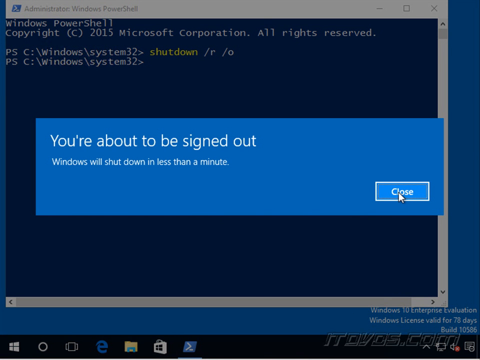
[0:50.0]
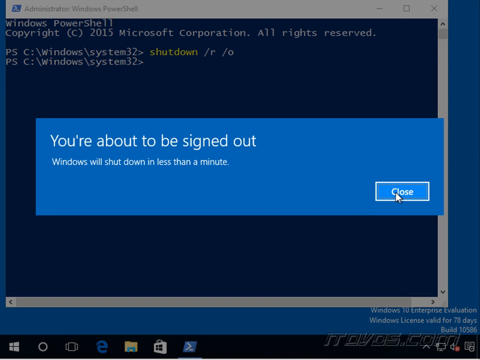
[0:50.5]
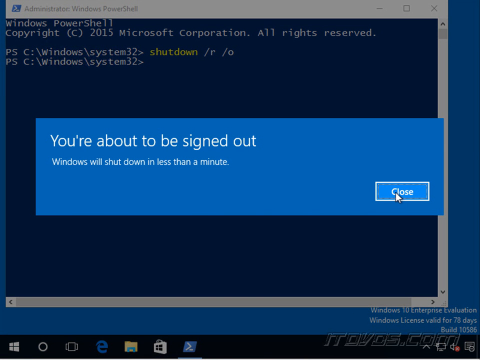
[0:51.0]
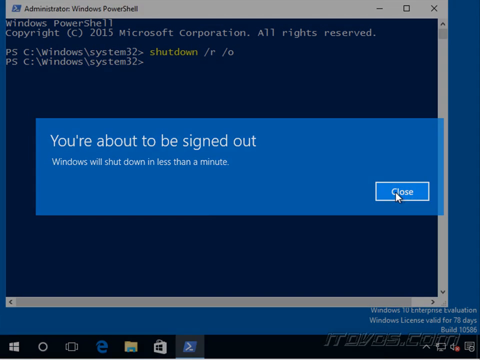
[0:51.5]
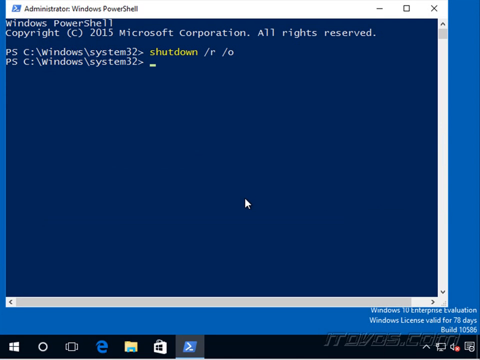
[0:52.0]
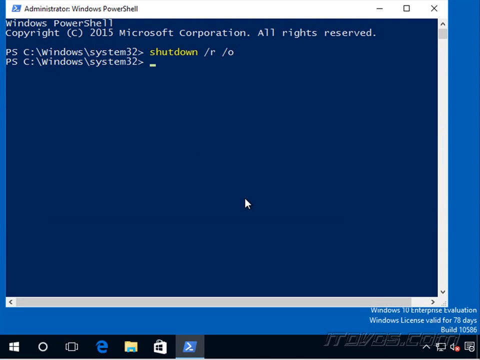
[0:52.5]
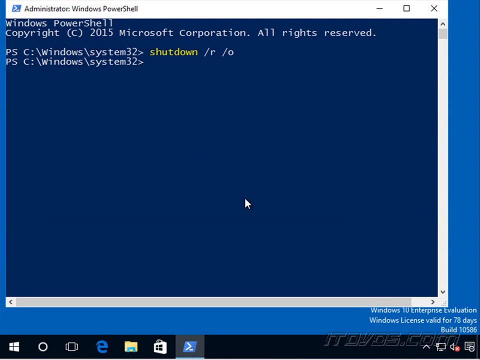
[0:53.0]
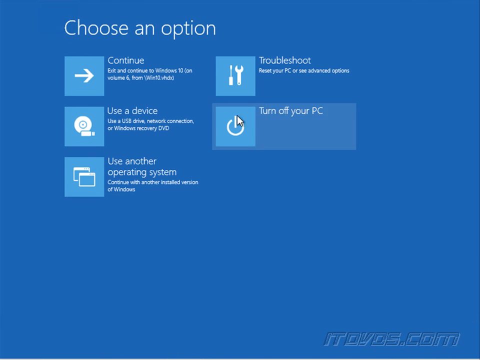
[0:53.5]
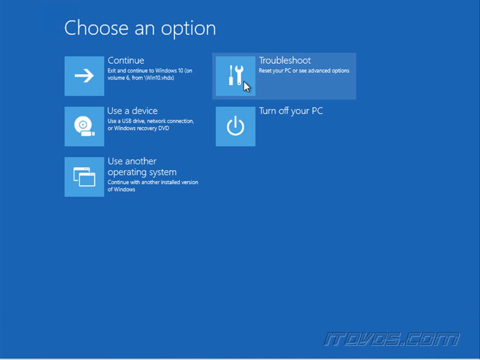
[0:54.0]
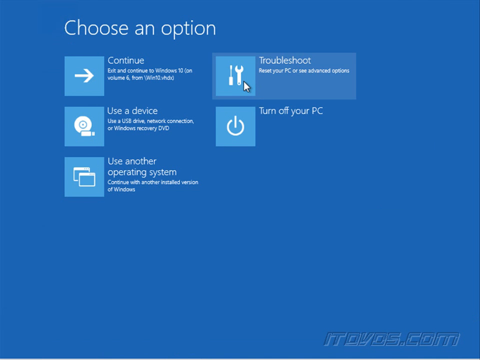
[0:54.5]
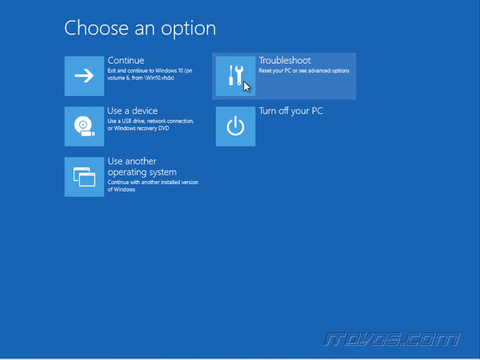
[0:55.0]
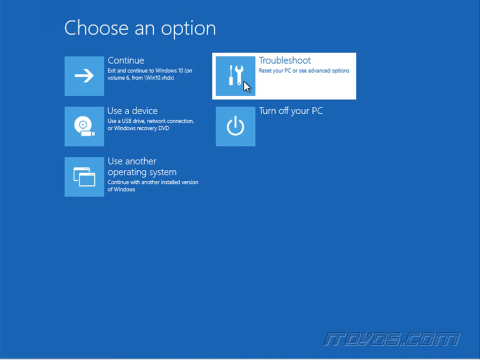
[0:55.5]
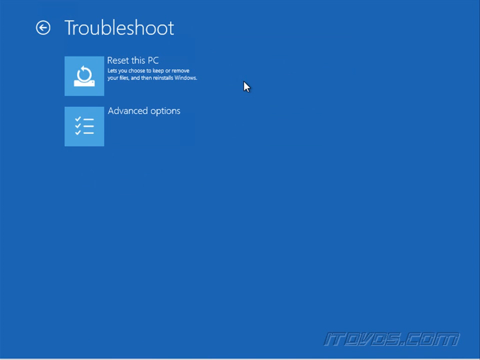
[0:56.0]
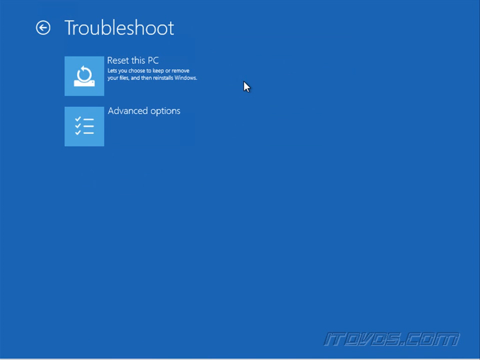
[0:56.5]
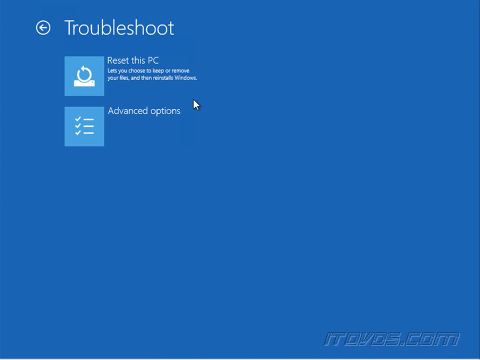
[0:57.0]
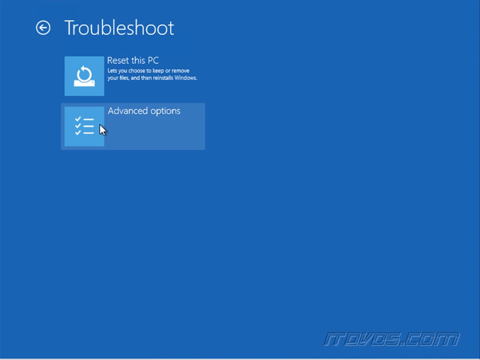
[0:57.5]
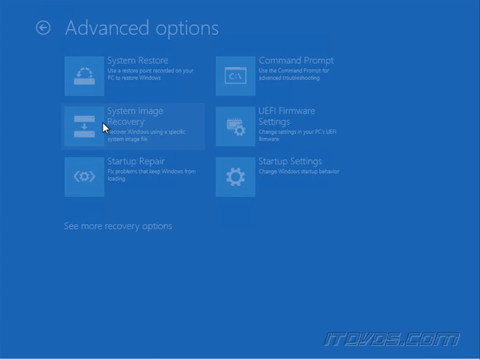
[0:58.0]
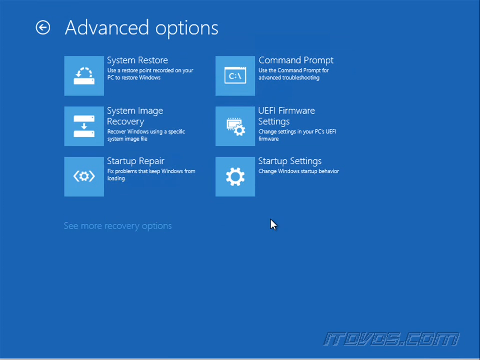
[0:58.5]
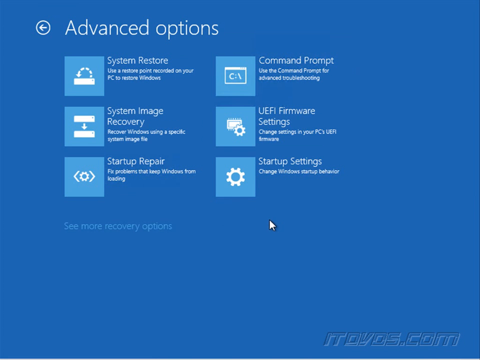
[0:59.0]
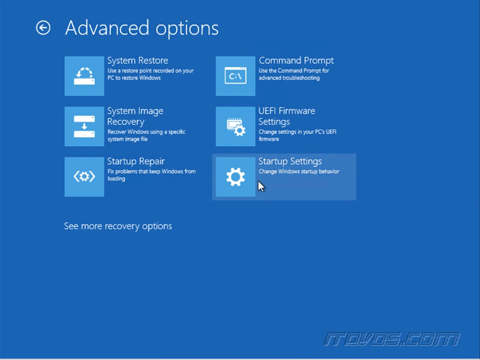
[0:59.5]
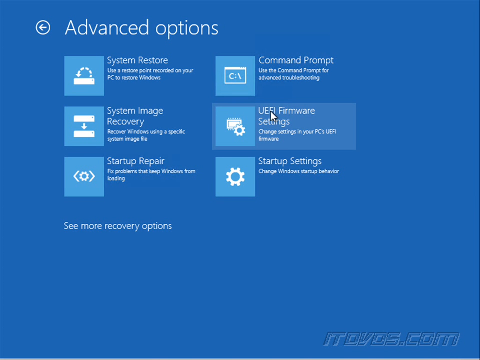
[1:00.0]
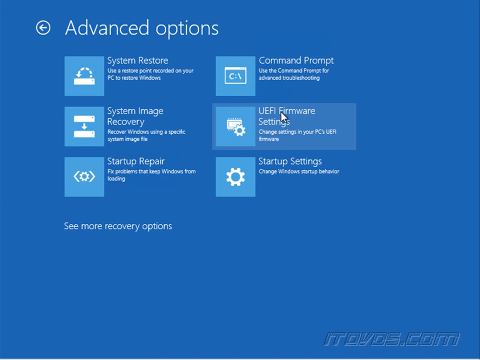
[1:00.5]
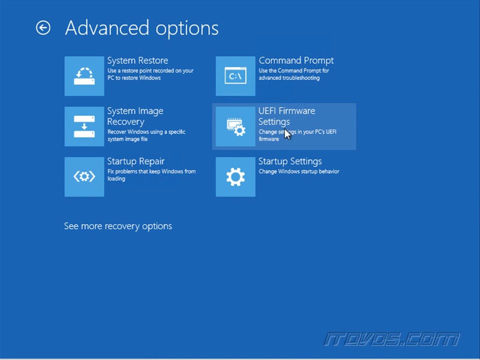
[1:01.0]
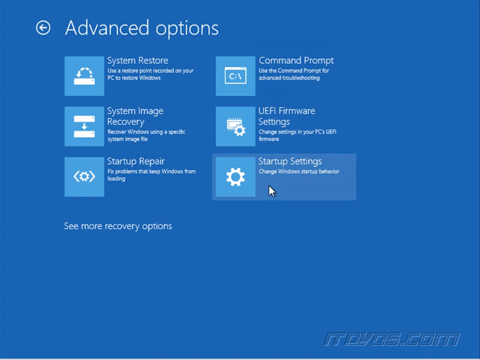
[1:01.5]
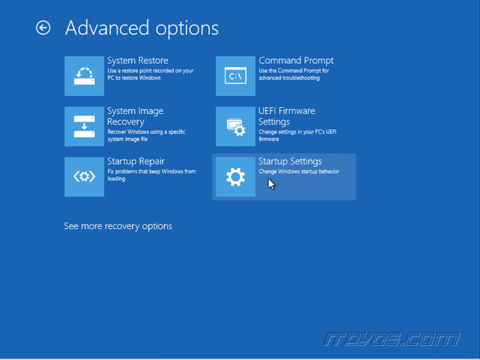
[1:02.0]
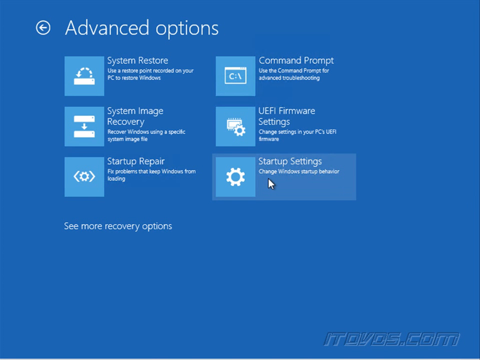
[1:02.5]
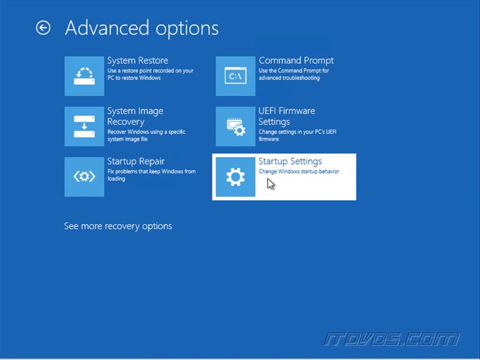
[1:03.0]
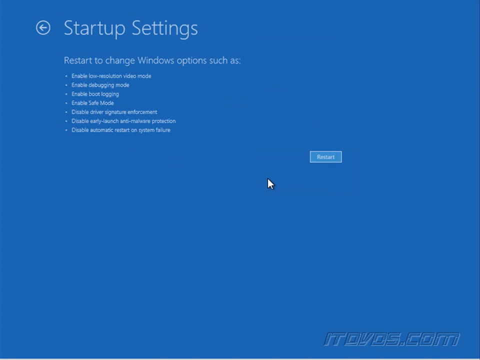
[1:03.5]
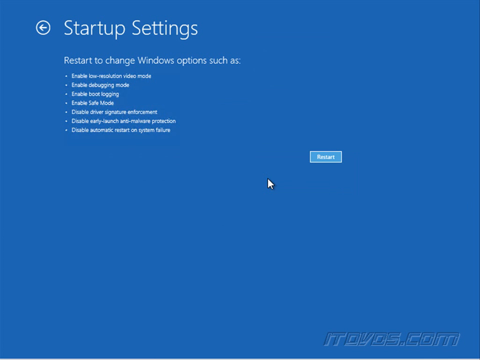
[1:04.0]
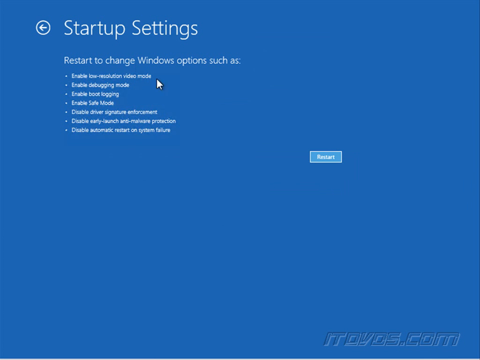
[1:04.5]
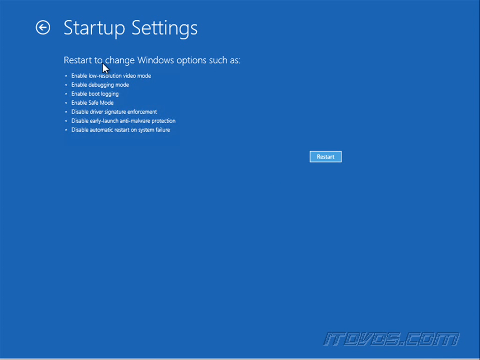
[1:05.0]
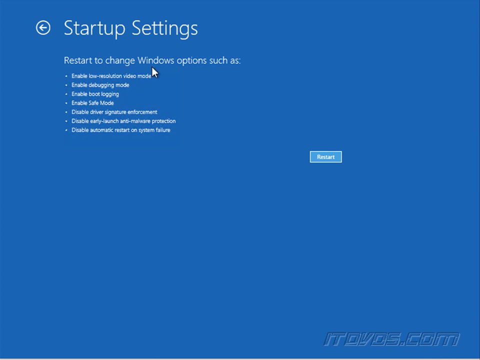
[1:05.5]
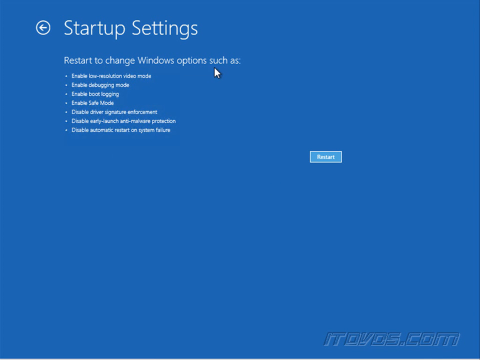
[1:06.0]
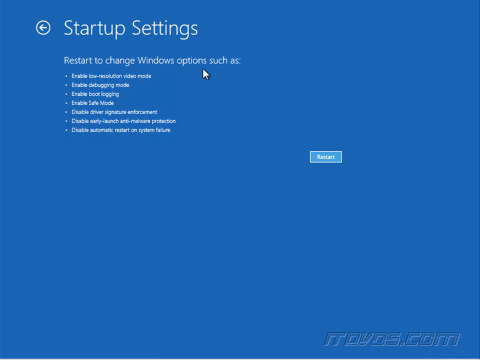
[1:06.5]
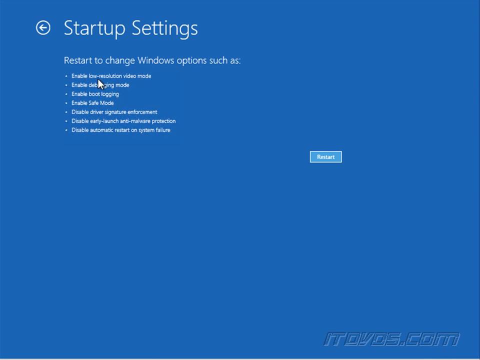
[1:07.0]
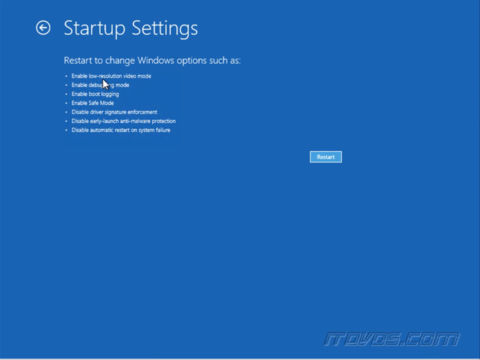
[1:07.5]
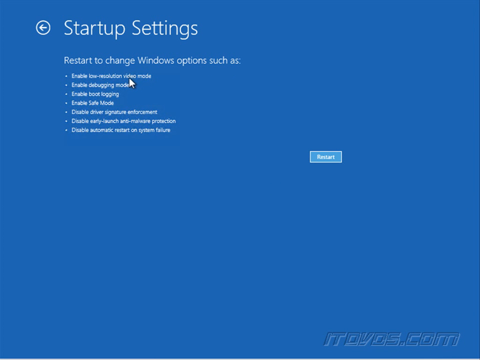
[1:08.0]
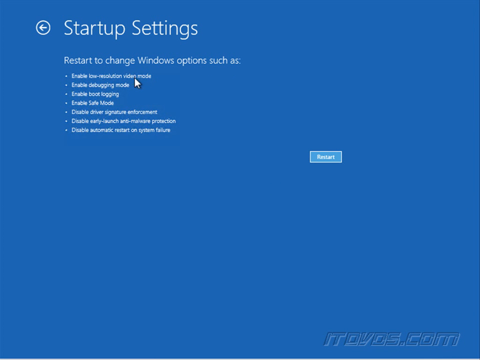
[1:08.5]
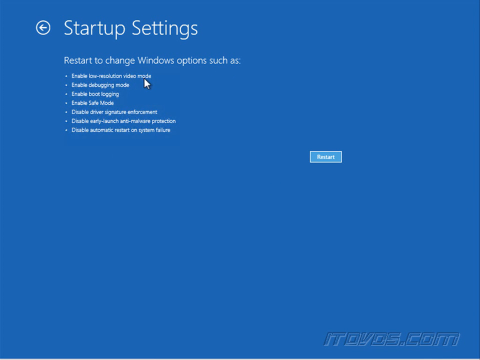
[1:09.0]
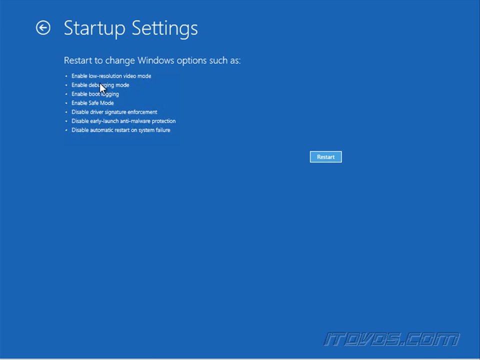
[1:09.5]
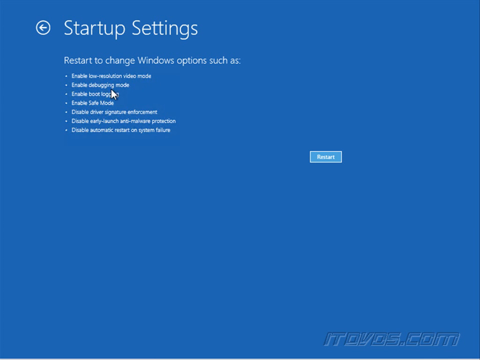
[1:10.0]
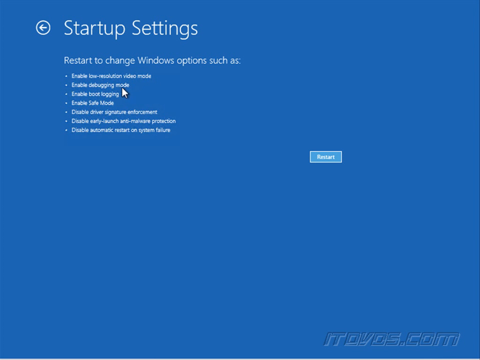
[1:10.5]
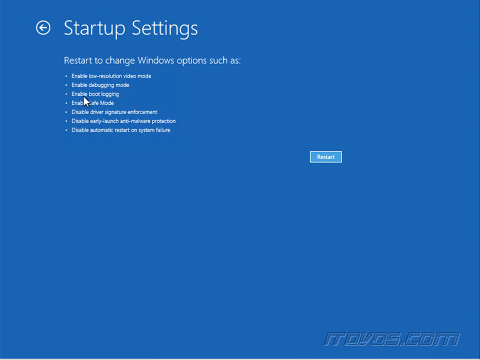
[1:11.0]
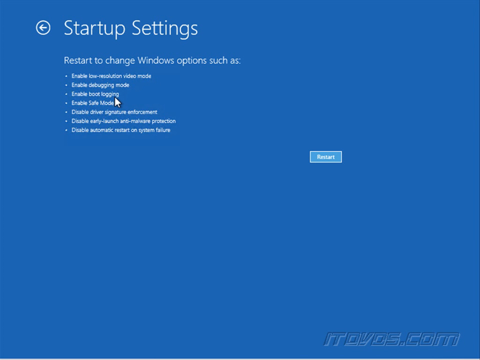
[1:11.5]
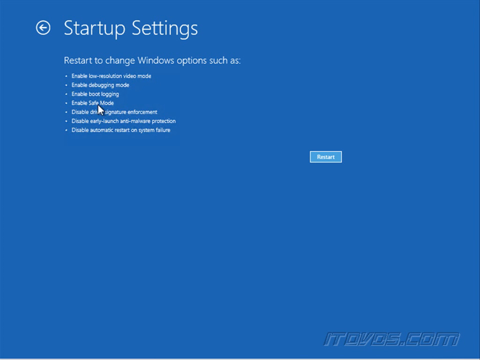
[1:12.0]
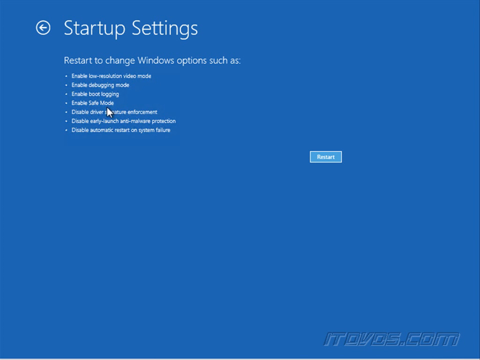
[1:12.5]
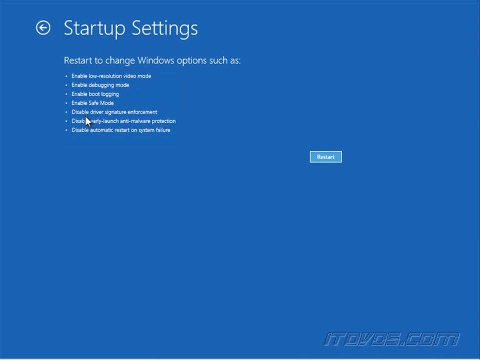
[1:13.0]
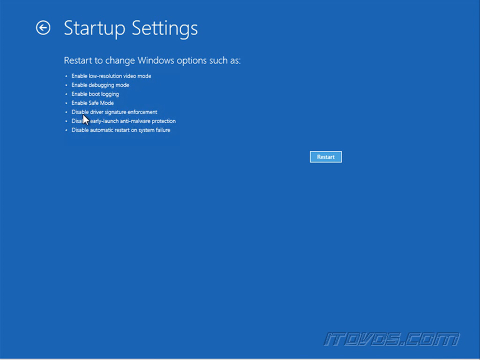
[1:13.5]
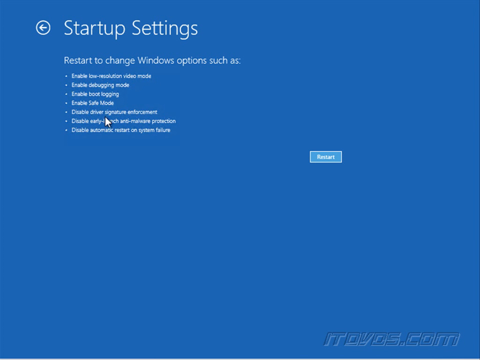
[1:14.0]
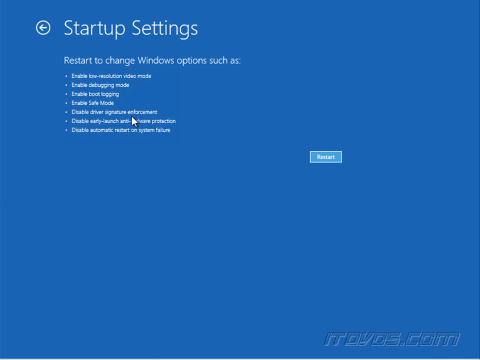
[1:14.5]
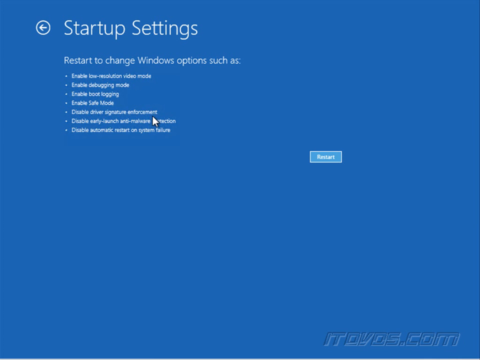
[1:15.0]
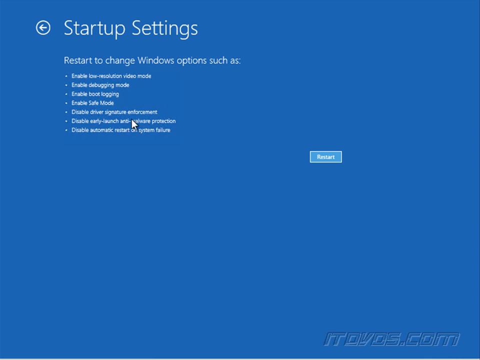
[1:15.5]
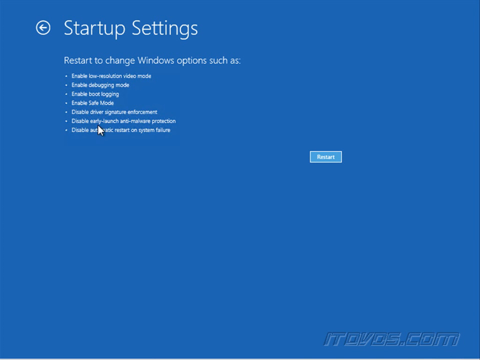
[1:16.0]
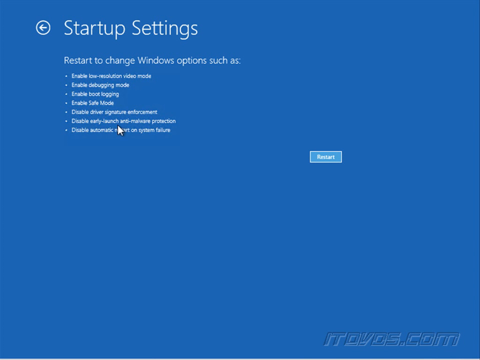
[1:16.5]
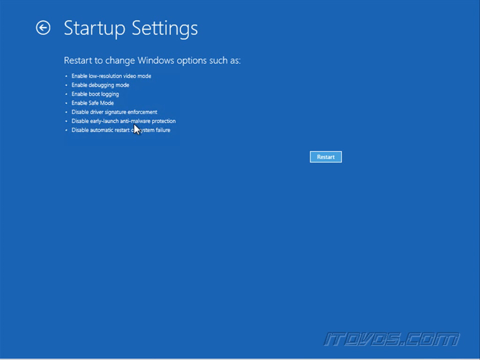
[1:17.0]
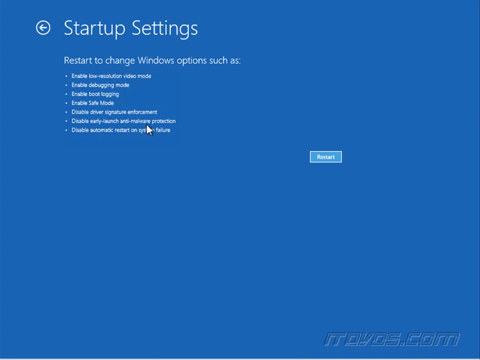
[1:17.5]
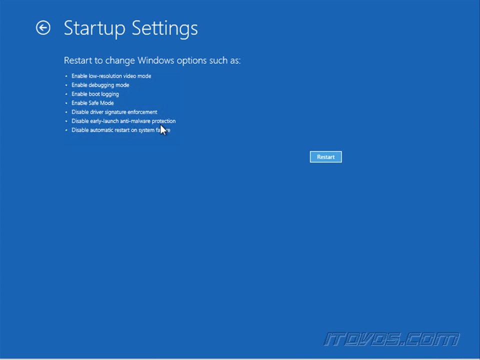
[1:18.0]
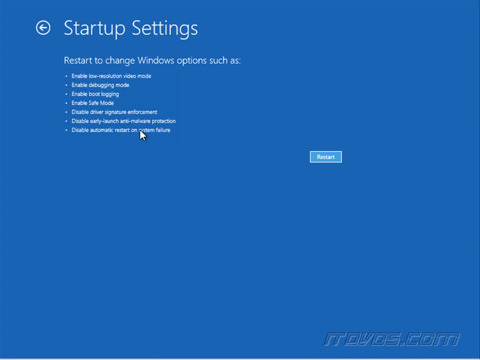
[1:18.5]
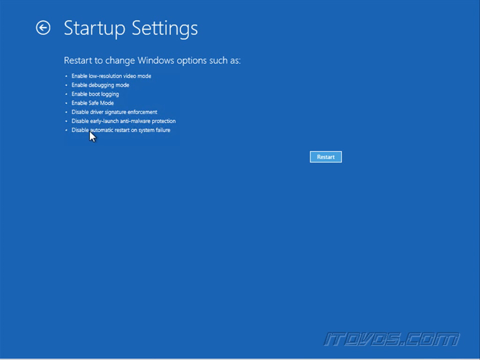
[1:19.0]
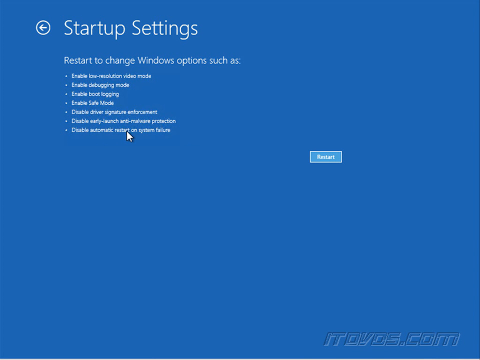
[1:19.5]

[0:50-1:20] The laptop is apparently being fixed. The PC goes into settings, and the user reads the information there. They go to the option to sign out, type, and go to troubleshoot. They read through the options and point the mouse cursor at the startup settings options. The laptop runs Windows 7, and the background is blue.